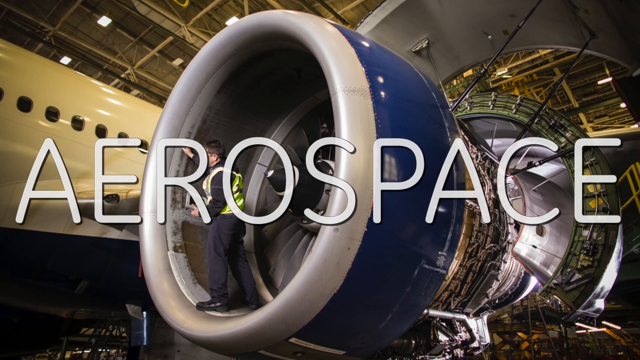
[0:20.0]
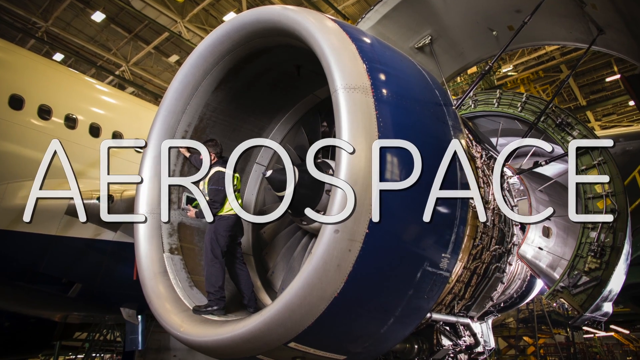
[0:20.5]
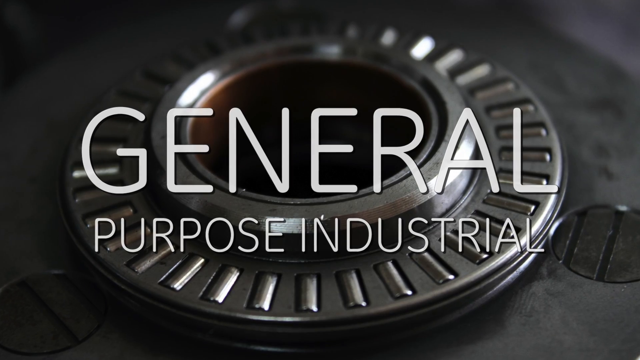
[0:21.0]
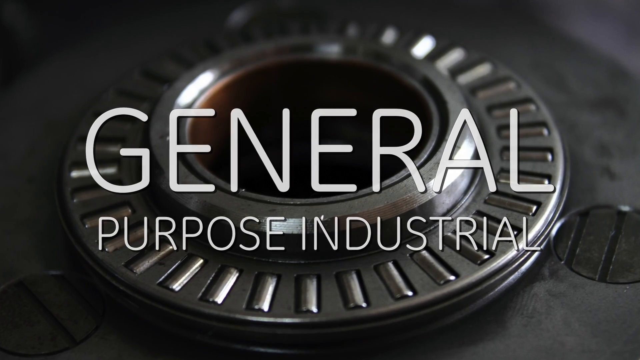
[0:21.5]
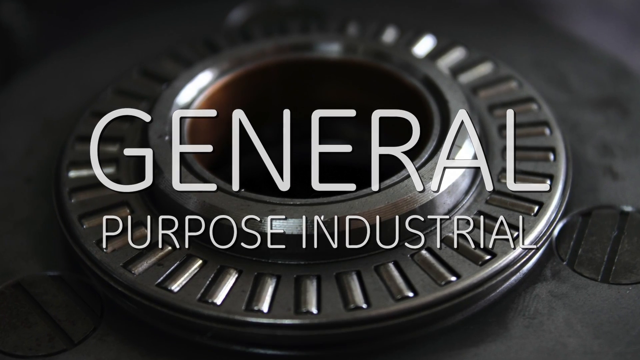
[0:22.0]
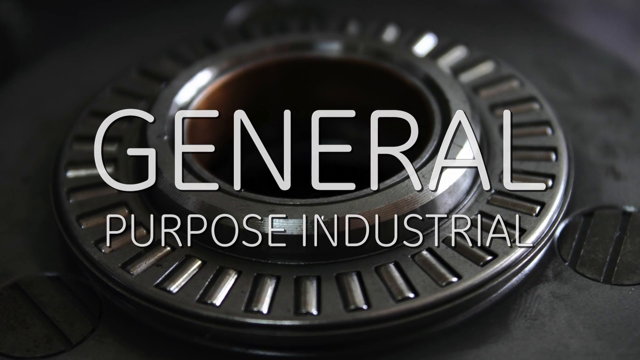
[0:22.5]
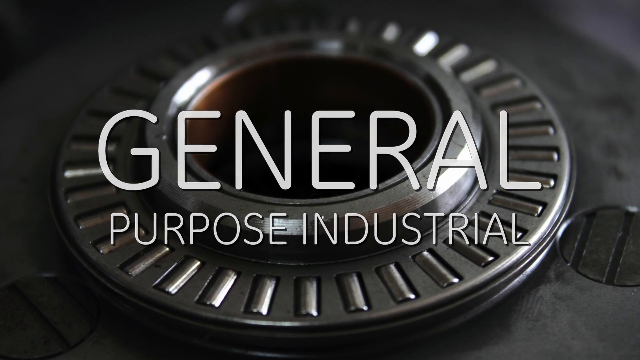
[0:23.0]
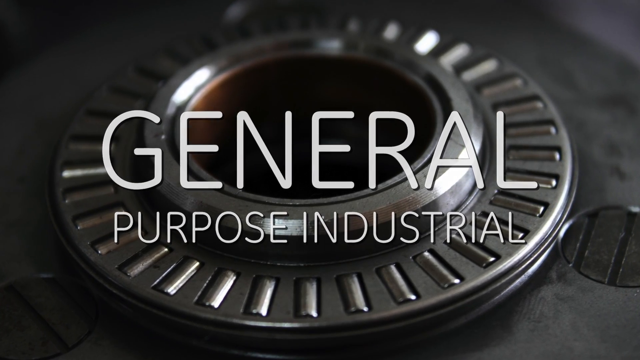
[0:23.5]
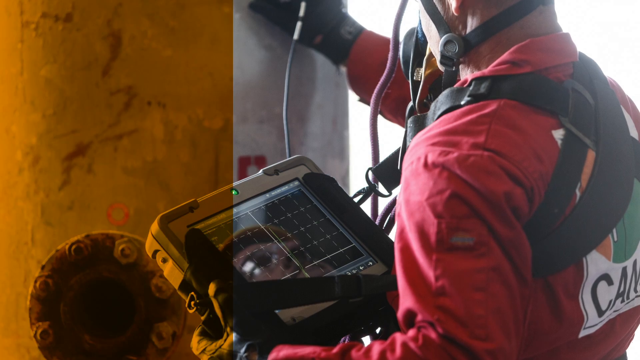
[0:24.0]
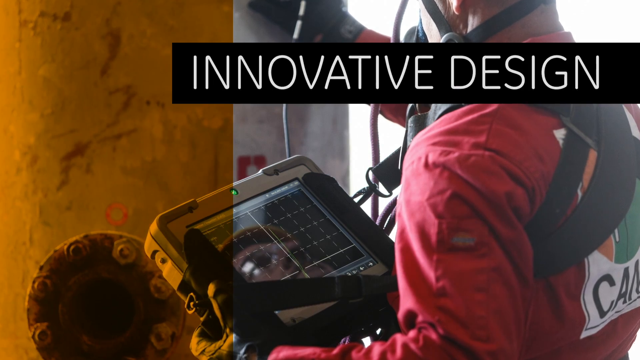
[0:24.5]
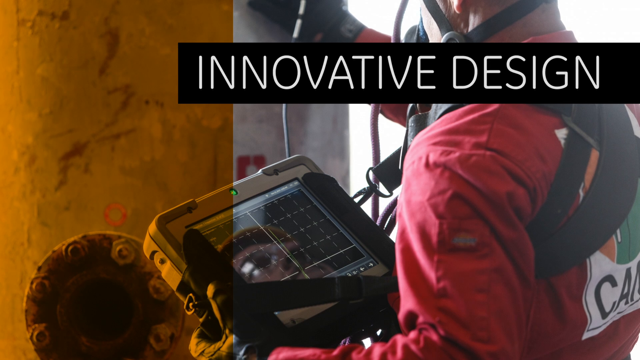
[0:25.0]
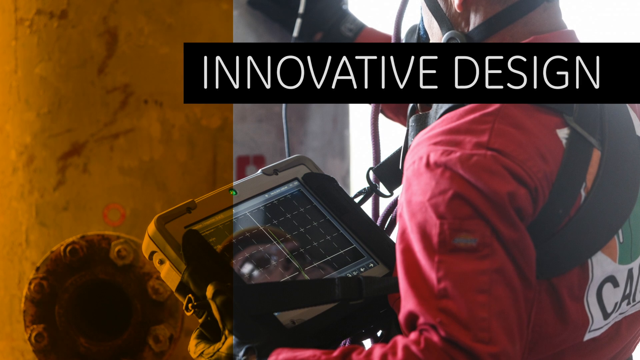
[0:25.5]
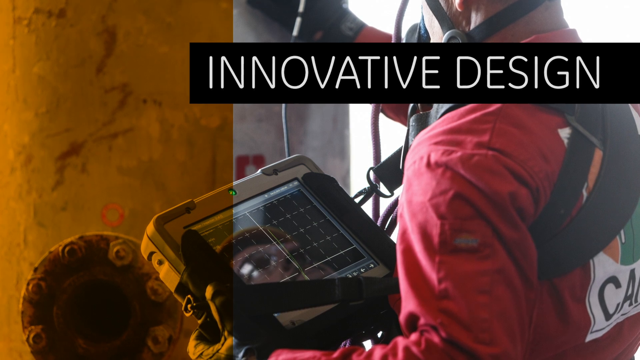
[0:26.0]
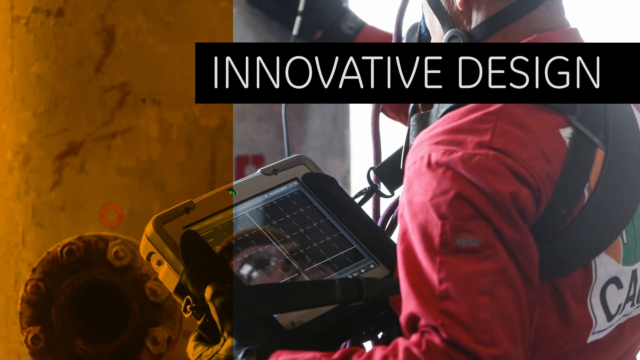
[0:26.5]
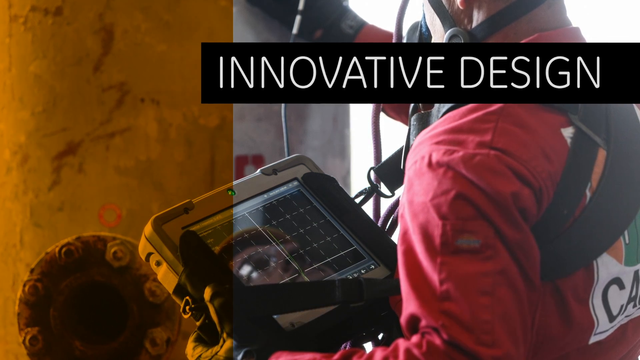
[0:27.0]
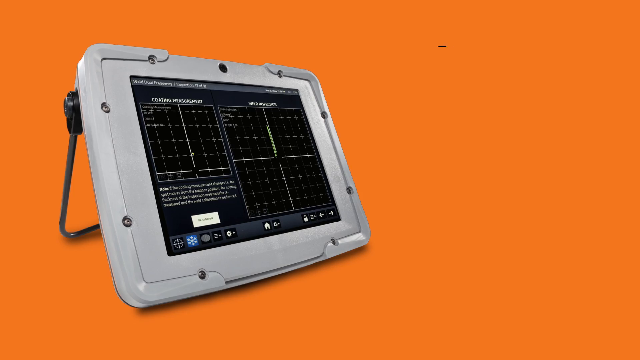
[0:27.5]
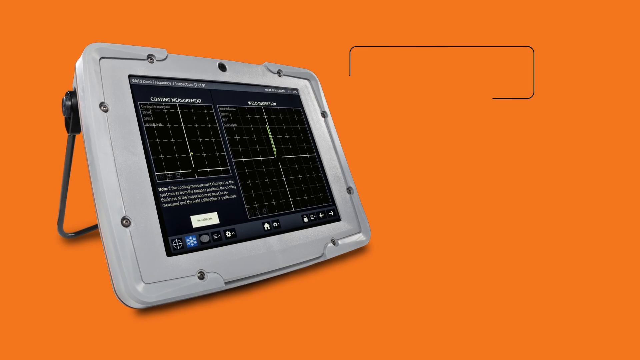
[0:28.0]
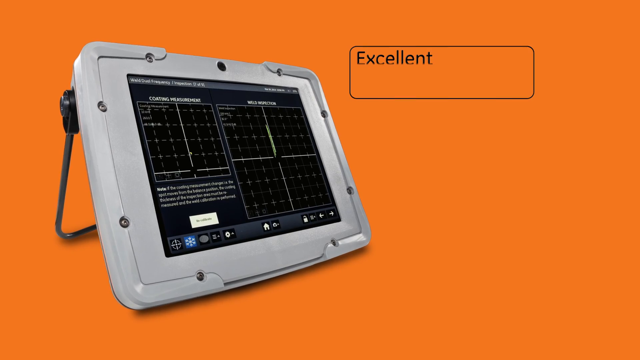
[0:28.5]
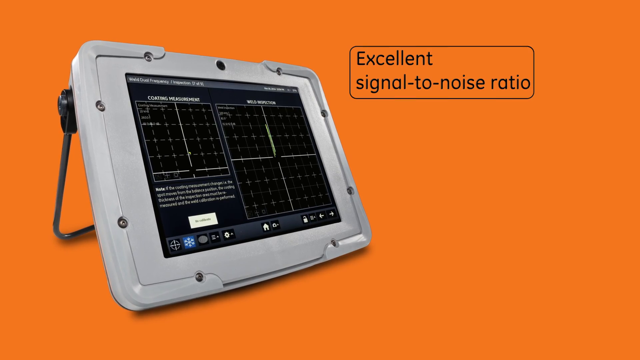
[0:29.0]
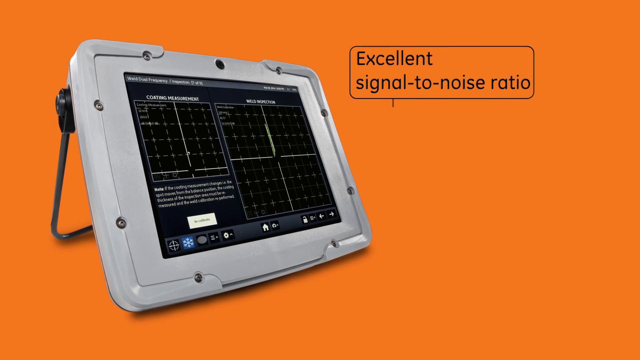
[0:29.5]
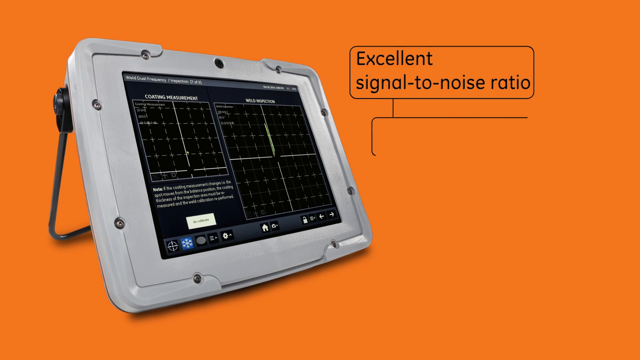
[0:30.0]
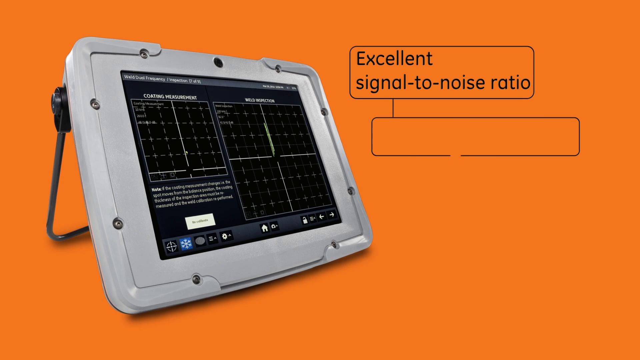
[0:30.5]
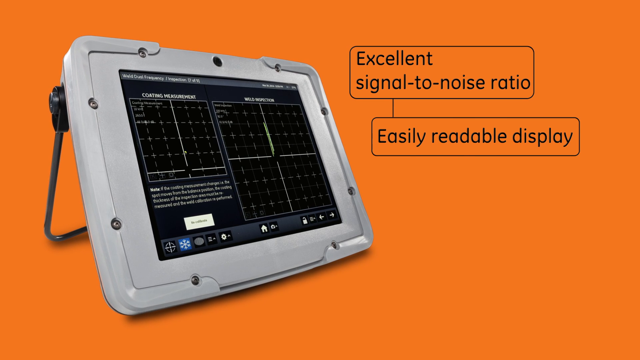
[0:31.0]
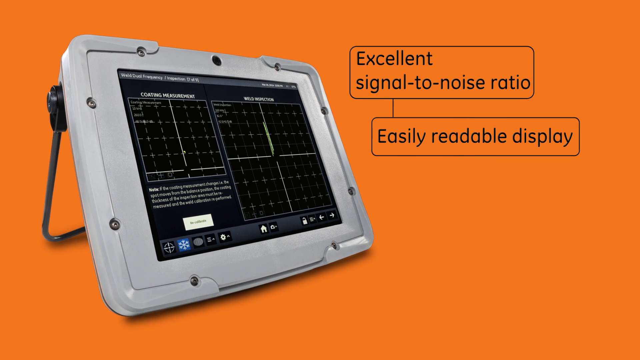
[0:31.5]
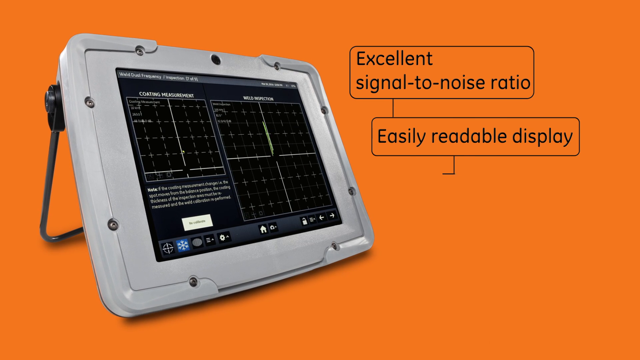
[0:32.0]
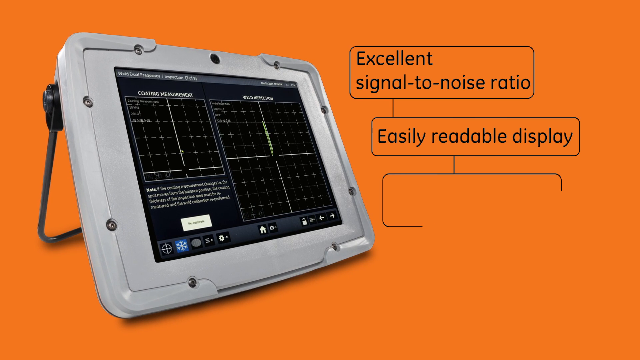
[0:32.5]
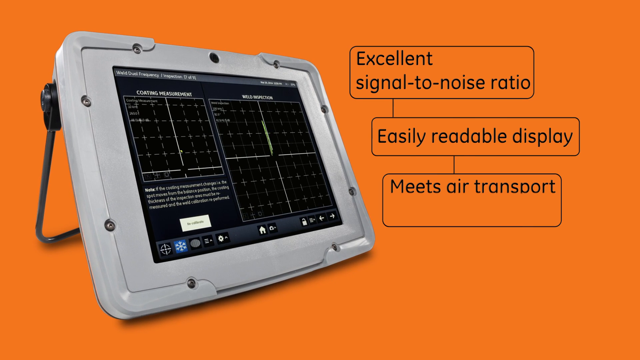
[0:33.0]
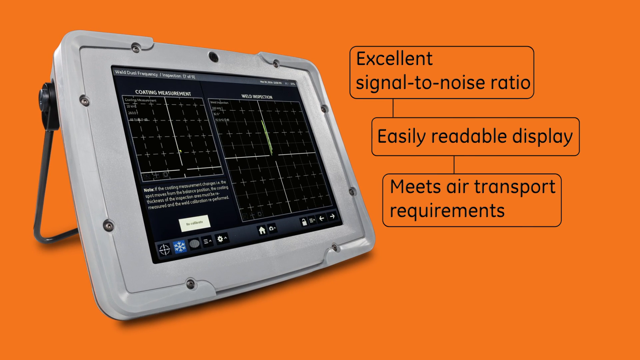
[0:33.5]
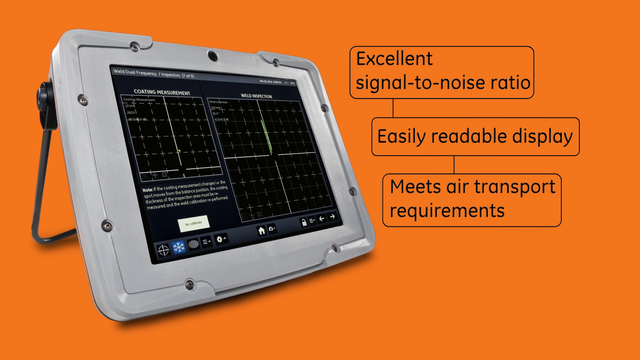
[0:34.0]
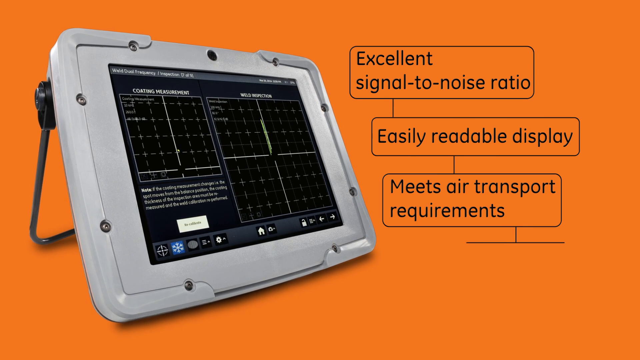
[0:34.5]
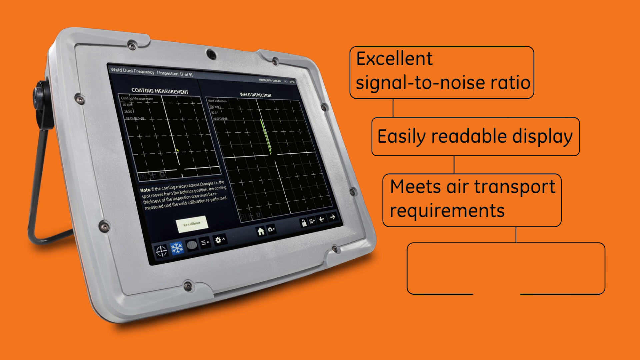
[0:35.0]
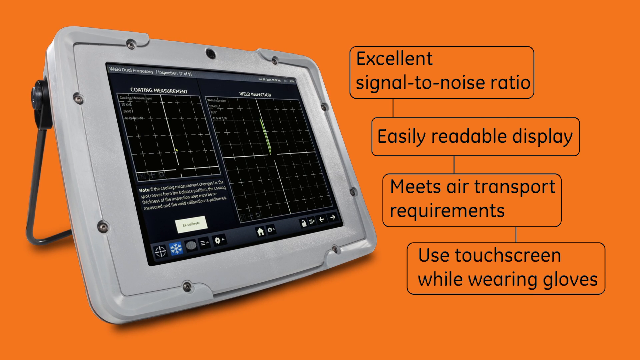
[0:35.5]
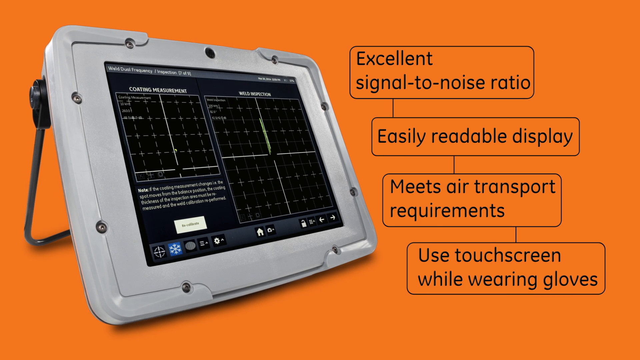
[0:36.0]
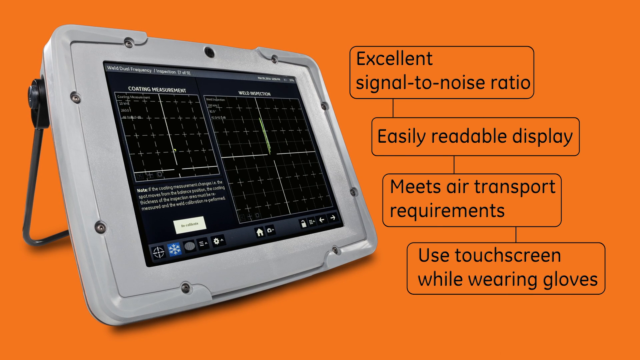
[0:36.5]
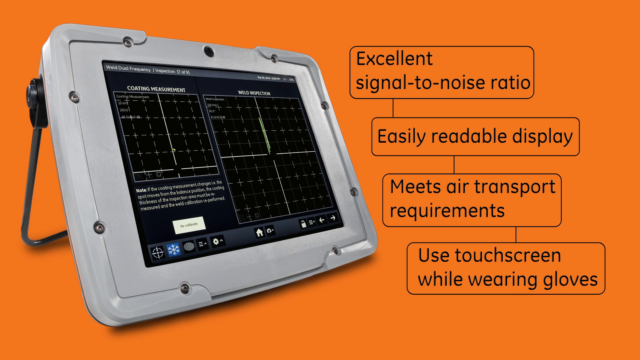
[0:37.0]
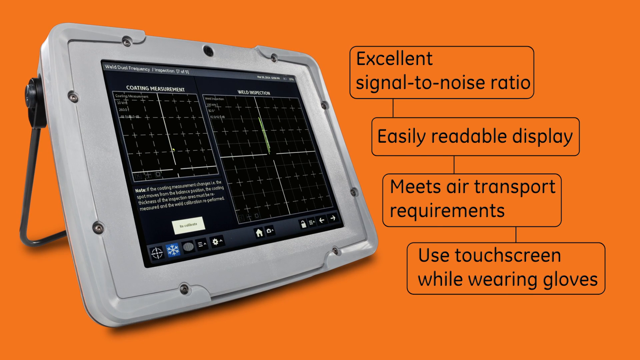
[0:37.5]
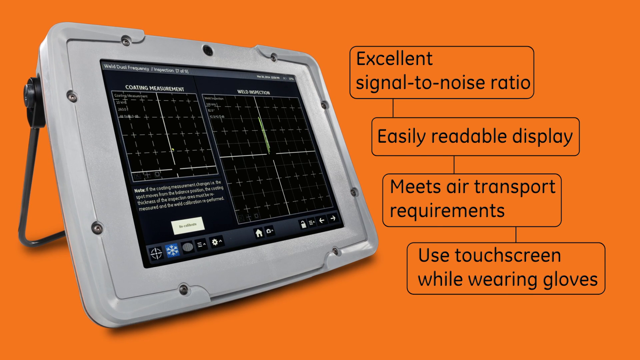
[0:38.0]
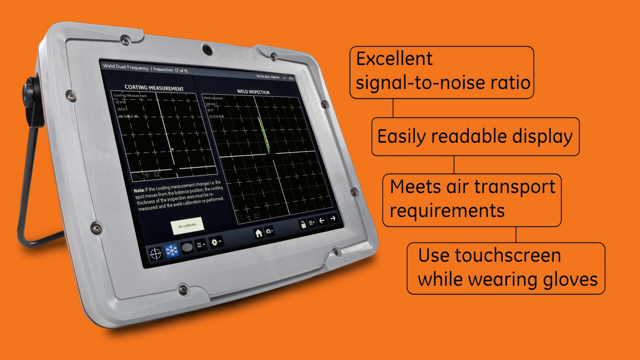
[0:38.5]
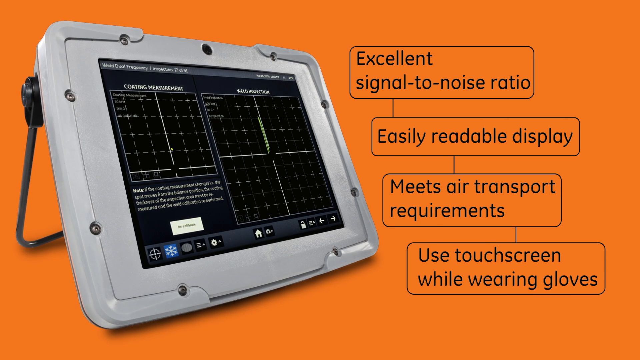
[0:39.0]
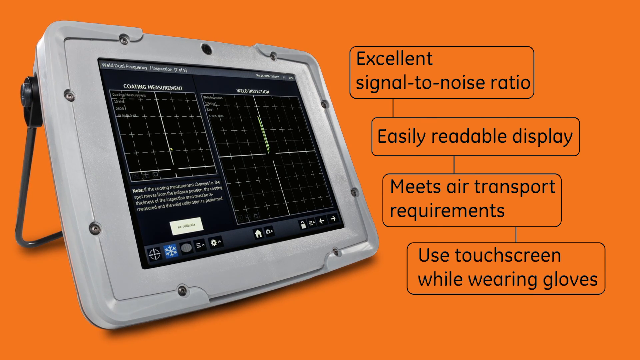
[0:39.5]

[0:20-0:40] A person stands inside an aircraft turbine, servicing it, wearing a yellow safety-reflective vest, while the word "aerospace" appears across the screen. The scene transitions to "general purpose industrial," with what appears to be a gear mechanism in the background. Next comes "innovative designs," showing the harnessed person in the red jumpsuit hanging on the wires, apparently servicing a pipe. The video then shows a tablet device with an orange background that appears to be a handheld service device. It is listed as having an "excellent signal-to-noise ratio" and an "easy readable display" and as meeting air transport requirements, and it can be used by touchscreen while wearing gloves. The video appears to be a product demonstration of the new device's features.